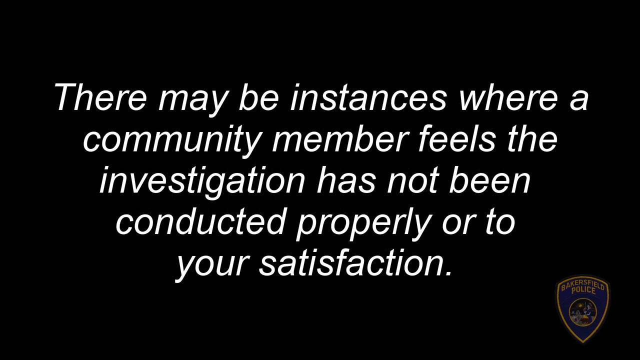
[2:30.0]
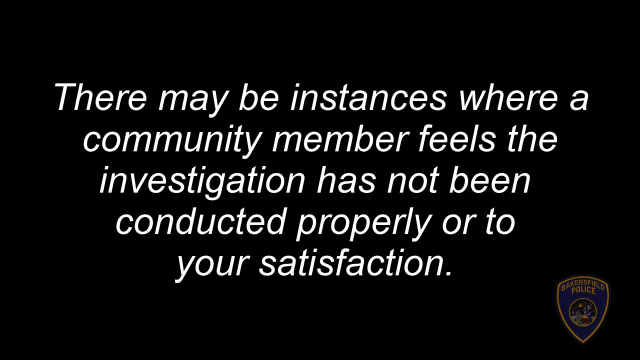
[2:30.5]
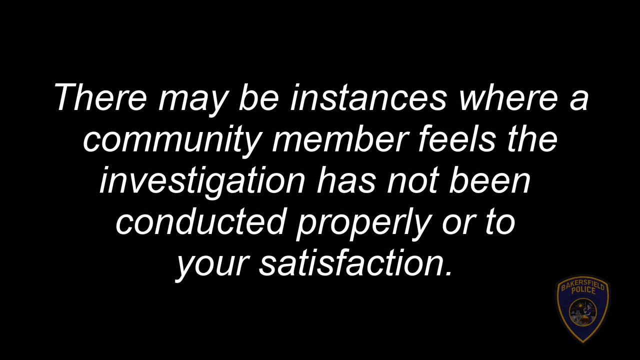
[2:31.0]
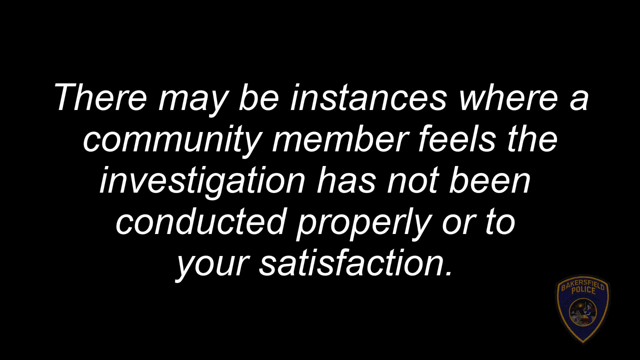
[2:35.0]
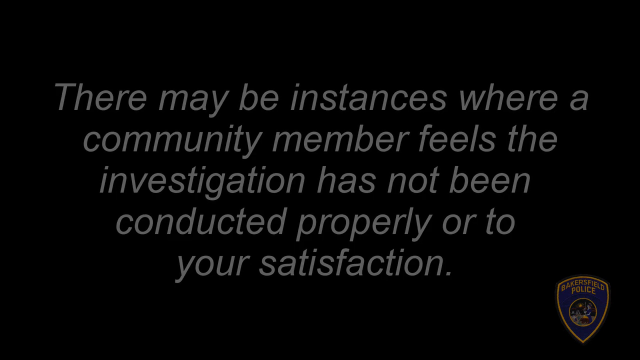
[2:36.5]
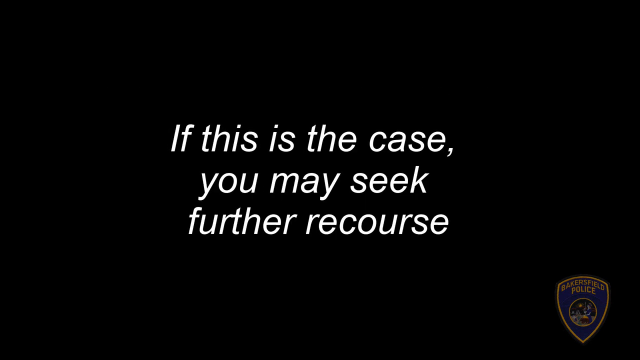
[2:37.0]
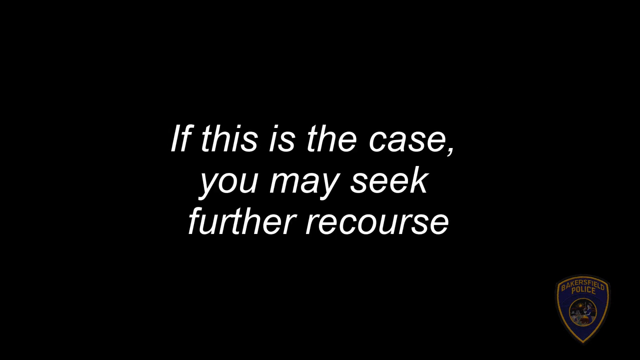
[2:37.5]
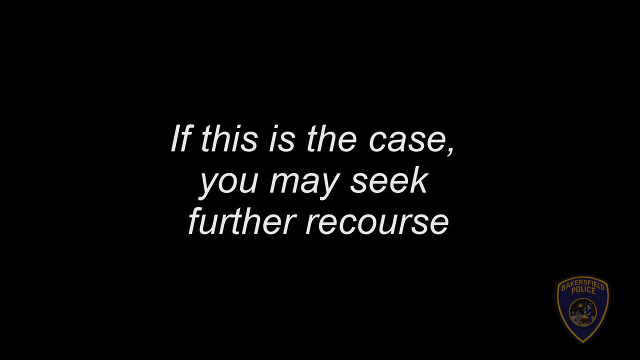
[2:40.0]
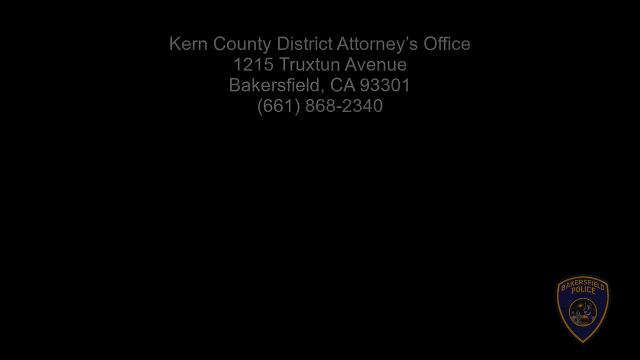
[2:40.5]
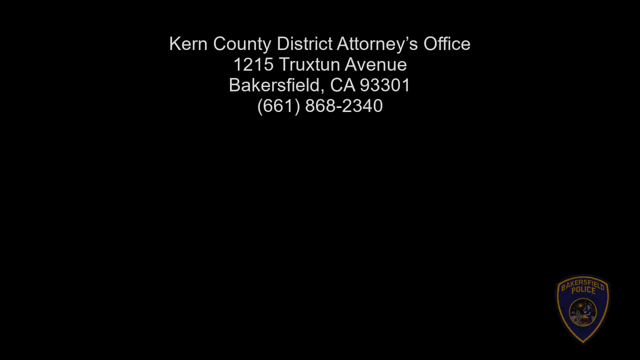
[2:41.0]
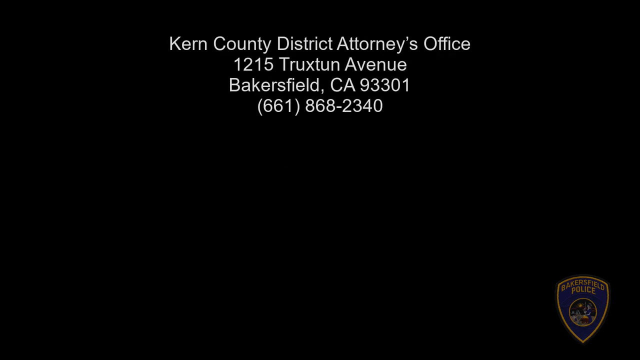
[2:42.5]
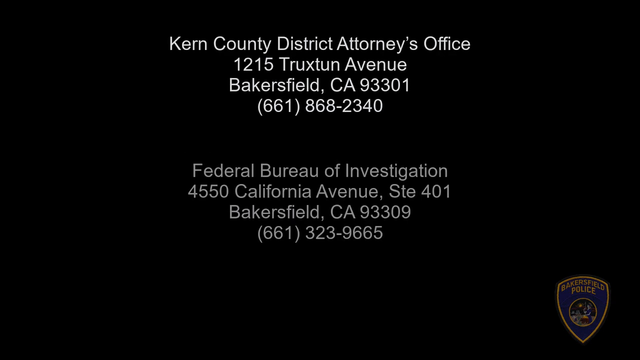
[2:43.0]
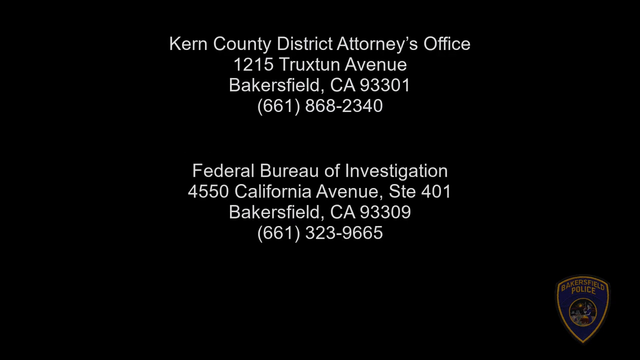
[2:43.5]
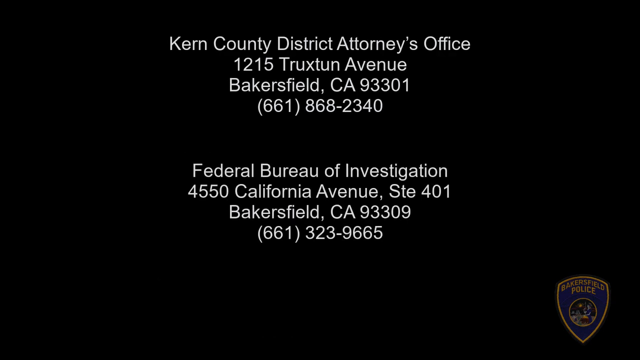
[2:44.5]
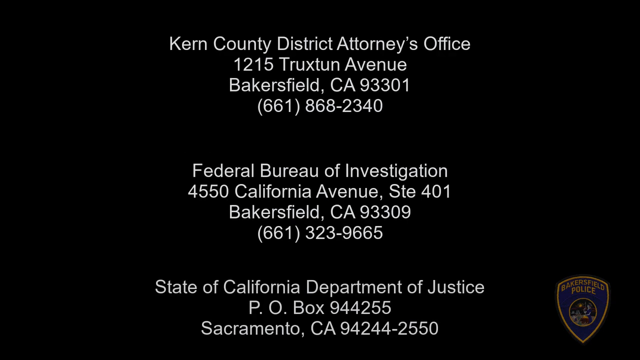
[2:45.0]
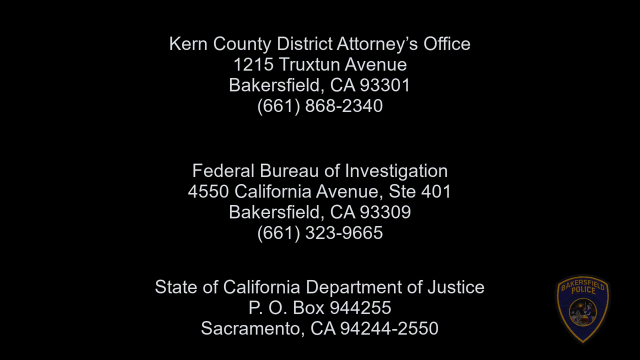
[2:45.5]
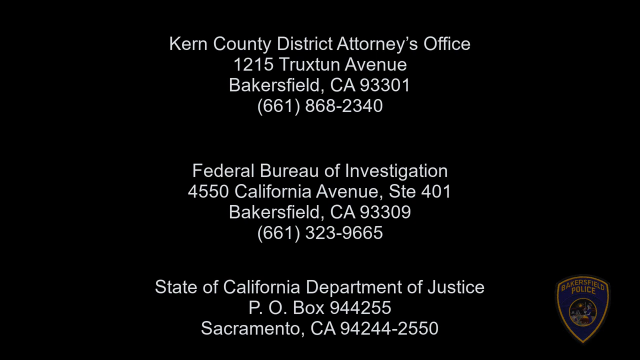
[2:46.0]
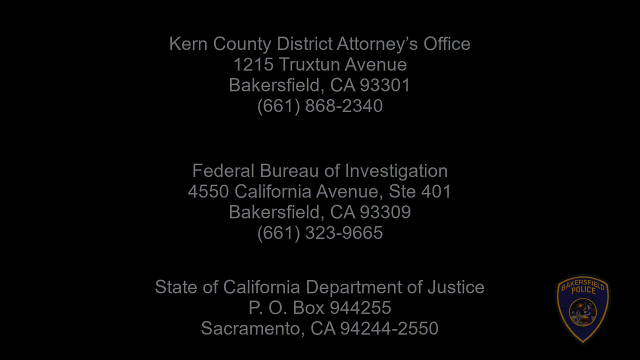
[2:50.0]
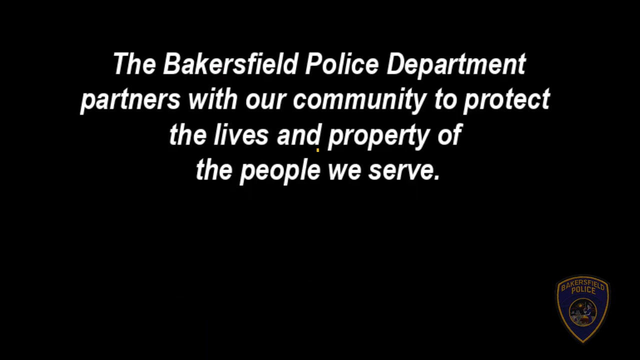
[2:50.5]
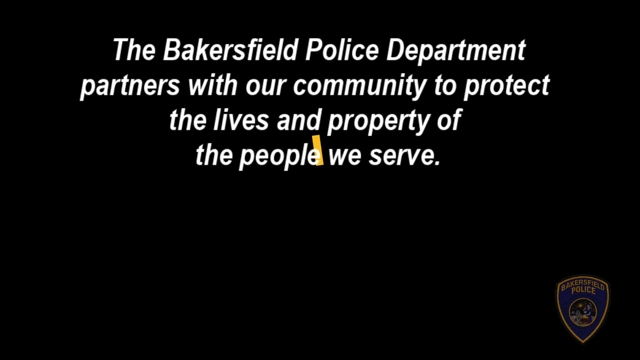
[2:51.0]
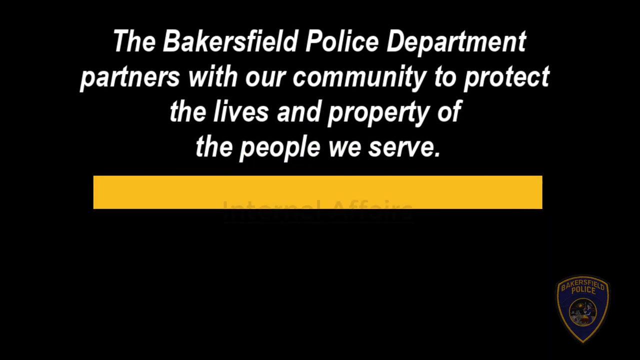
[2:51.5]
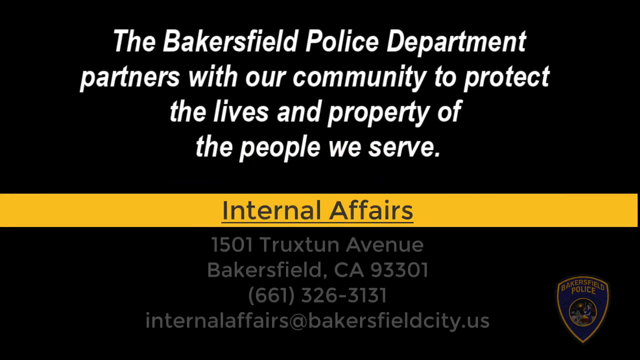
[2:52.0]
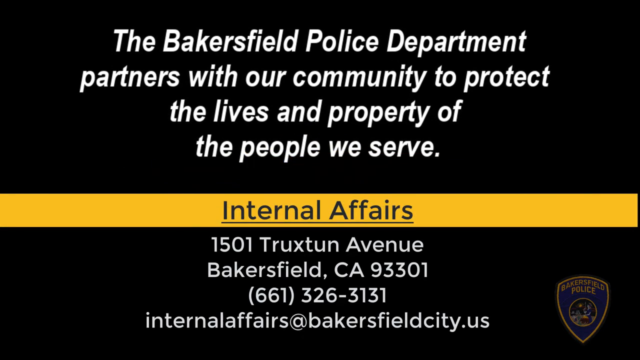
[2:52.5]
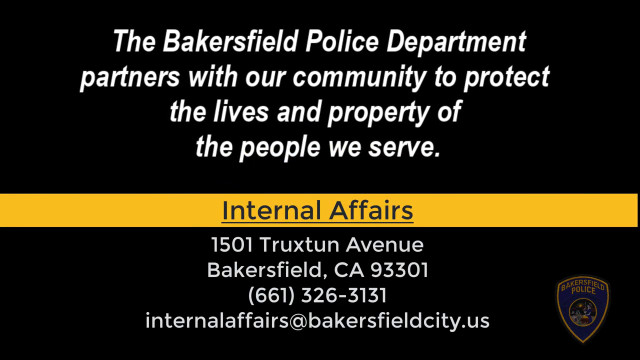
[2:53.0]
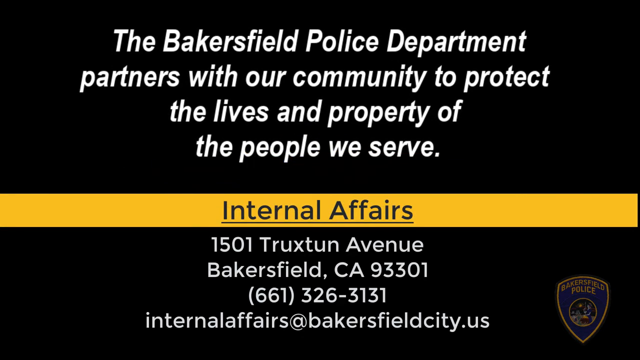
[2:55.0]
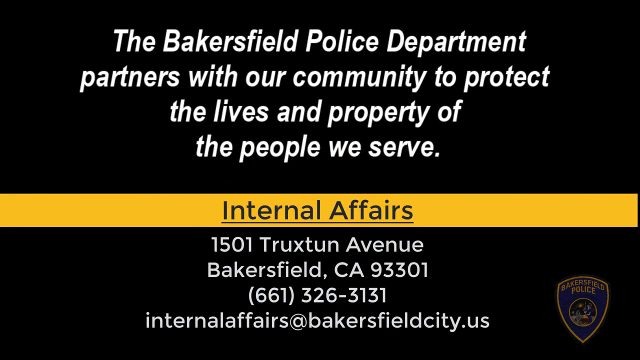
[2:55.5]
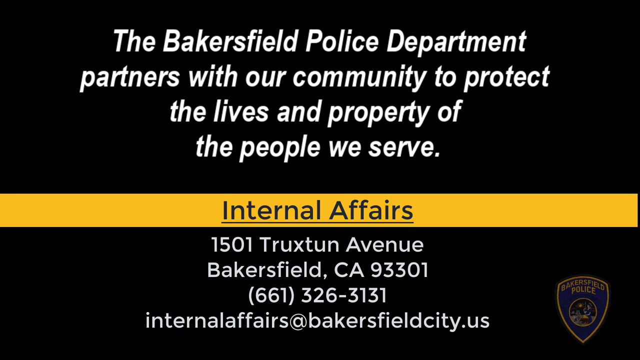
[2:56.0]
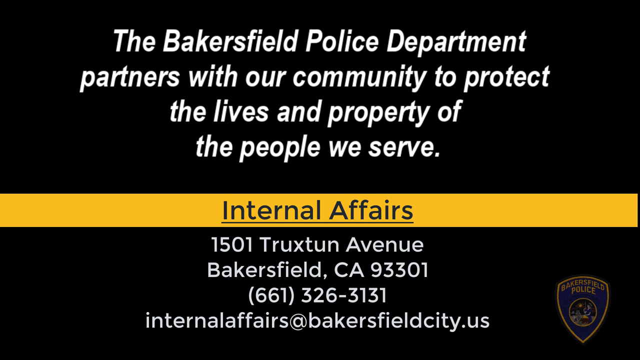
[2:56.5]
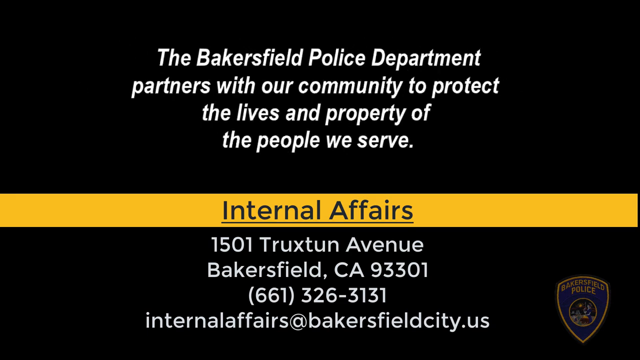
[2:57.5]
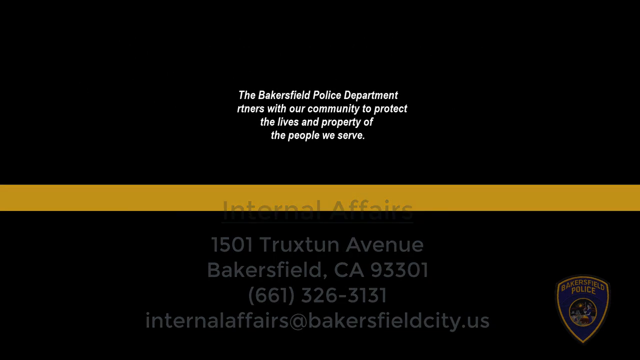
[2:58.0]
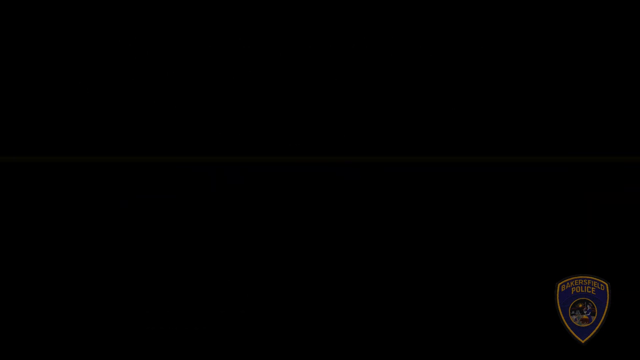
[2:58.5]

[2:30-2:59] Text on the screen reads "there may be instances where a community member feels the investigation has not been conducted properly to your satisfaction. If this is a case, you may seek further recourse." Further information then appears: "Kern County Police Attorney's Office, 1215 Truxton Avenue, Bakersfield, California" with 93301 and 661-868-2340; below that "Federal Bureau of Investigation, 4550 California Avenue, STE-401, Bakersfield, California" with 93309 and 6613239665; and below that "State of California Department of Justice, PO Box 944255, Sacramento, California" with 94244-2550. Next the screen reads "the Bakersfield Police Department partners with our community to protect the lives and property of the people we serve", followed by "Internal Affairs" and "1501 Truxton Avenue, Bakersfield, California". A bright yellow banner above the 1501 Truxton Avenue line contains the words "Internal Affairs". The police shield reading "Bakersfield Police" is still at the bottom right.